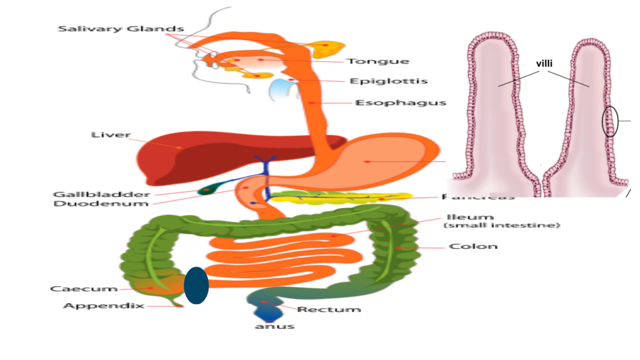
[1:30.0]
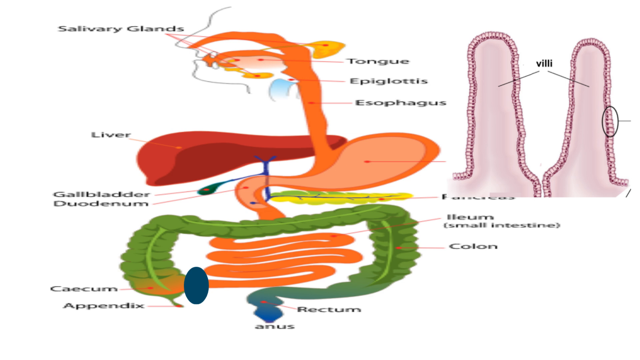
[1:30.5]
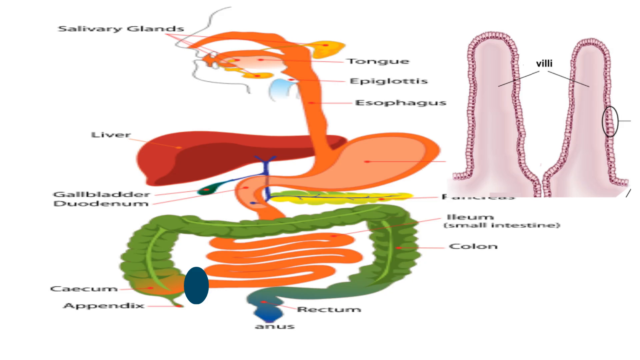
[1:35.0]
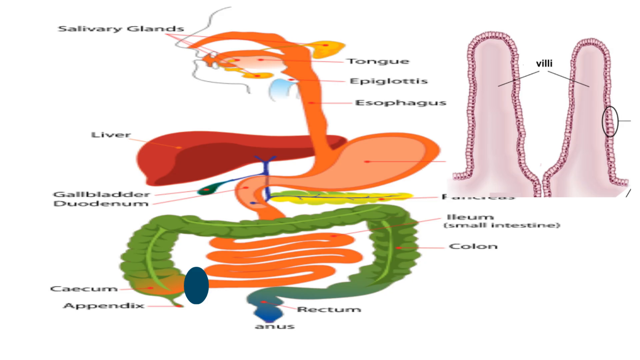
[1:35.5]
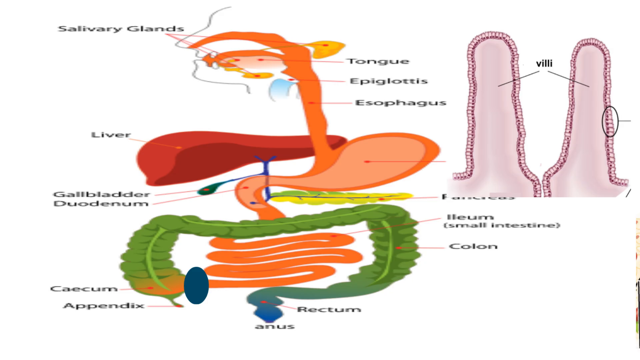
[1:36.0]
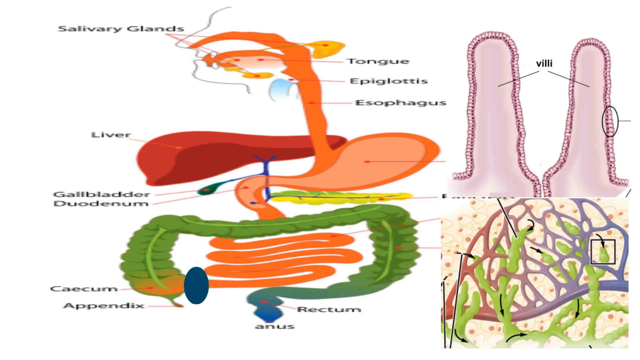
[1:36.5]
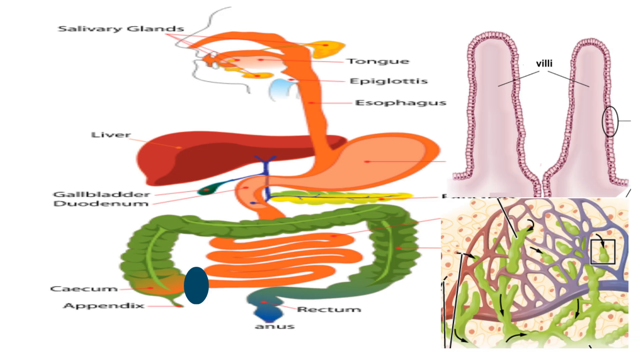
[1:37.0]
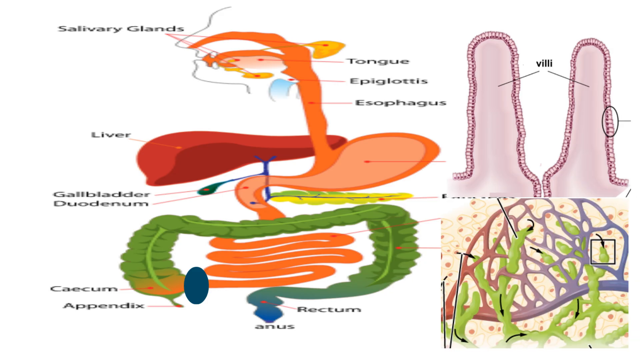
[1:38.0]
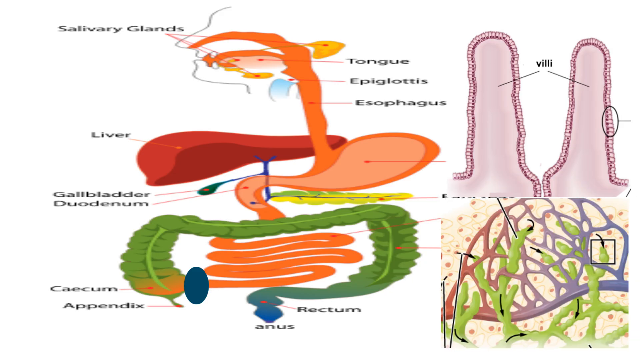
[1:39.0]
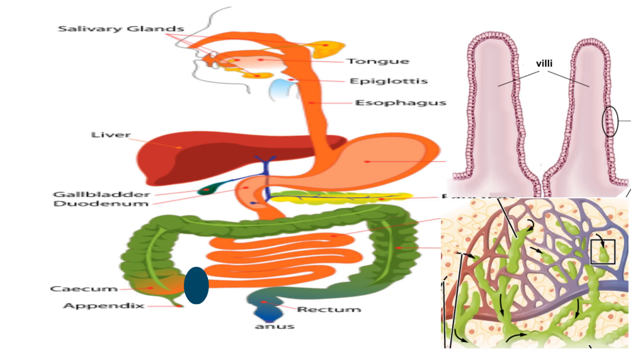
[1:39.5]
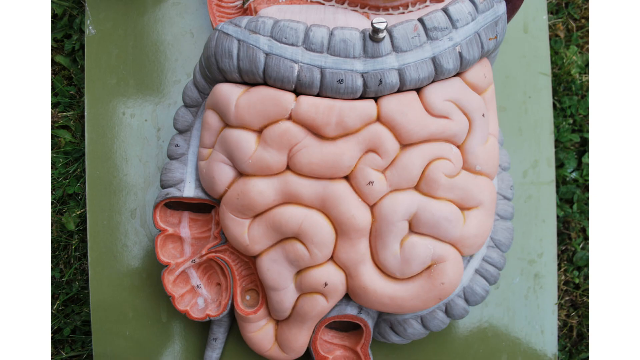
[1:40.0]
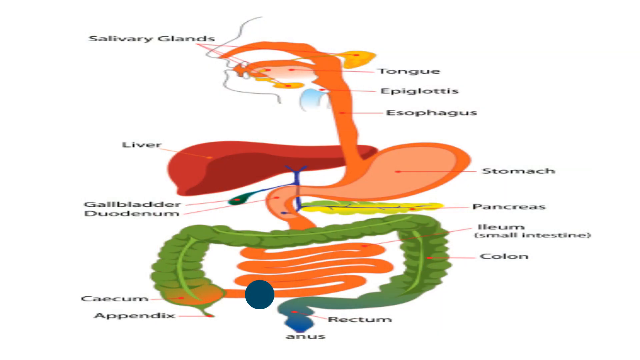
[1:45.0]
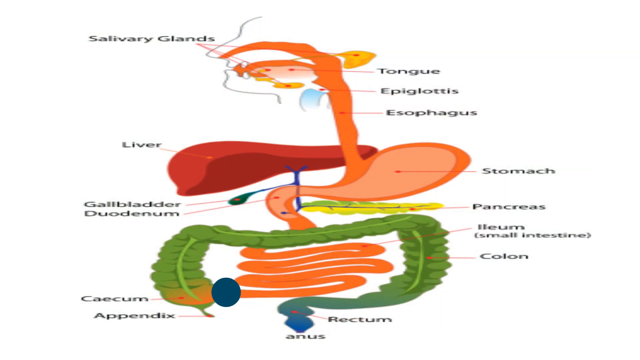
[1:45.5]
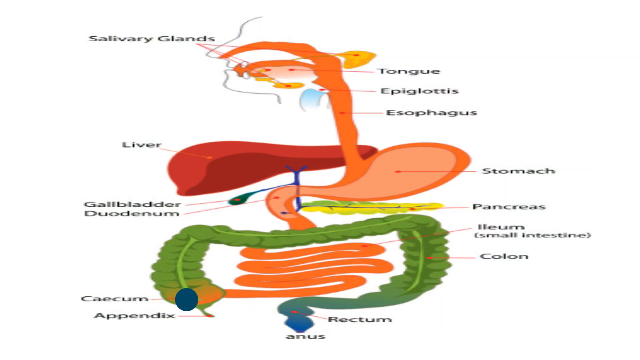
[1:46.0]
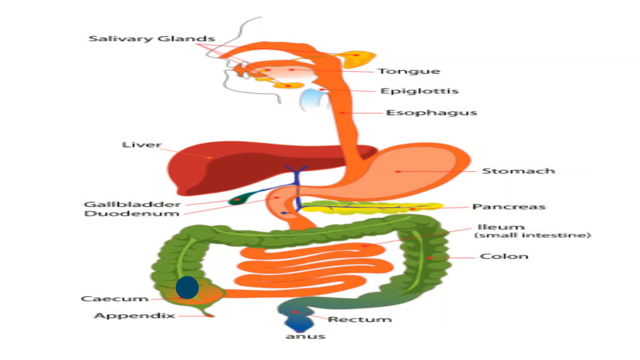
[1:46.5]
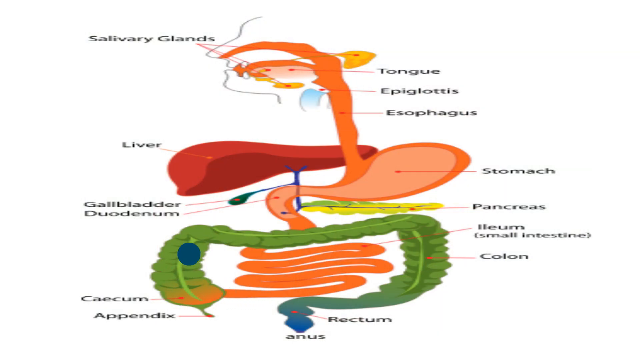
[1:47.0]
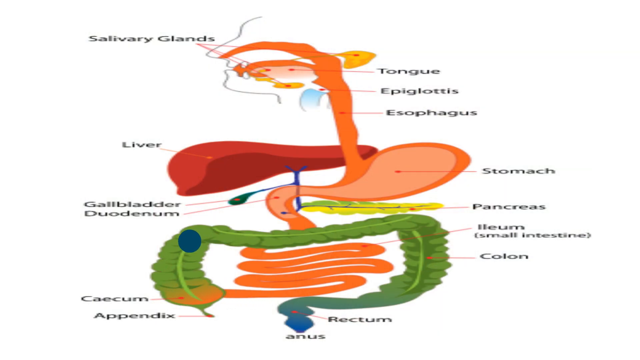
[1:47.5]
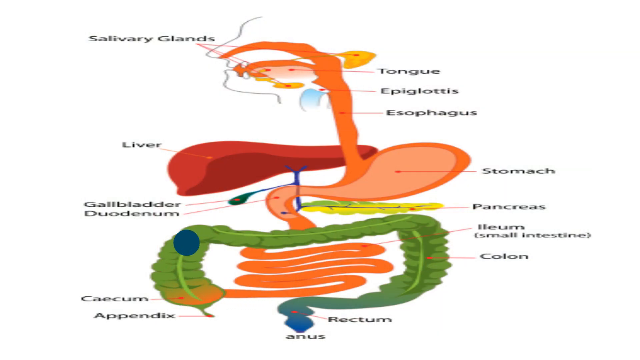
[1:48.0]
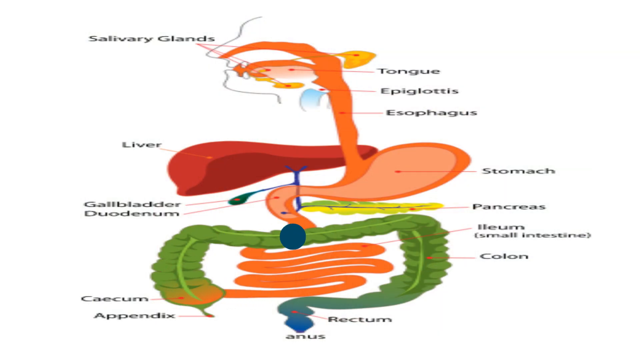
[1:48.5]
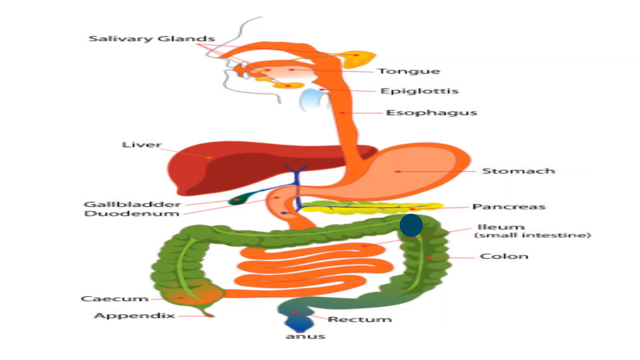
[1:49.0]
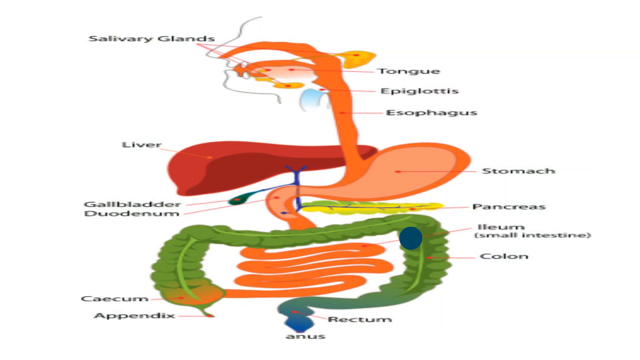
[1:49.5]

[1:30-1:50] A schematic gastrointestinal apparatus is shown. In the first seconds, an image appears in the lower right corner of the frame. At the top left and top right are the names of the various components and organs of the digestive system. At the top right there is another illustration in pink, with the names of the structures shown in black on a white background. Next, another image of some portions of the gastrointestinal duct is shown; it seems to be a photo rather than a digital illustration. At the sides of the image, at the left and right ends of the frame, there seems to be vegetation, and the extreme left and right edges of the frame are white. In the last part, a blue spherical cursor moves from the lower central part of the image to the left.